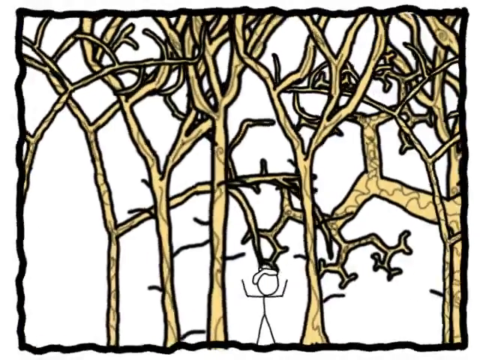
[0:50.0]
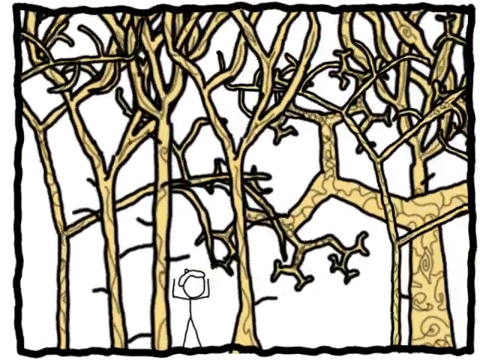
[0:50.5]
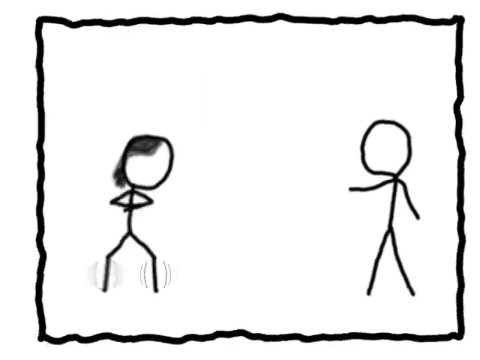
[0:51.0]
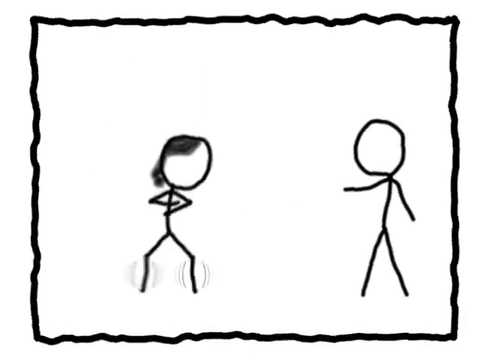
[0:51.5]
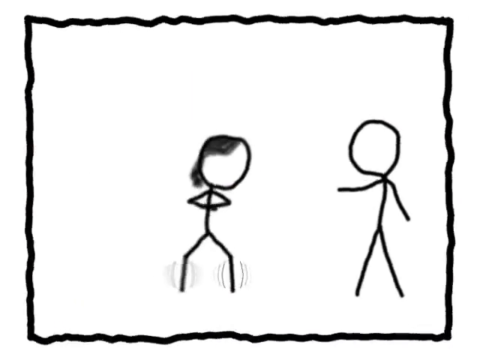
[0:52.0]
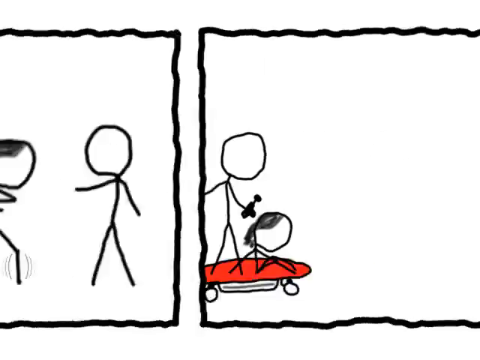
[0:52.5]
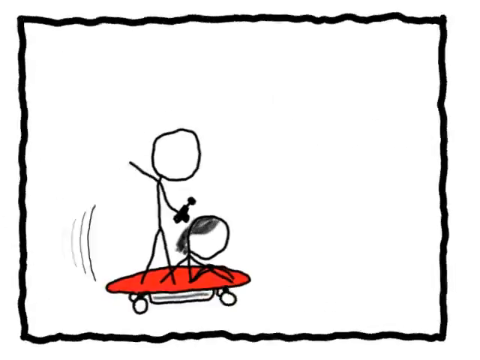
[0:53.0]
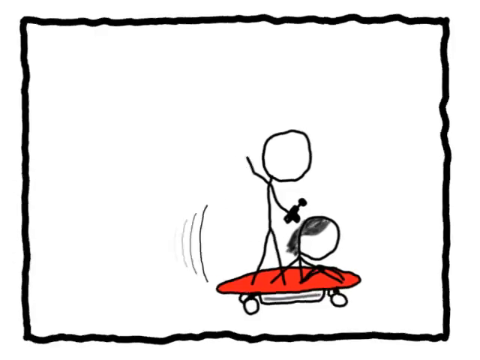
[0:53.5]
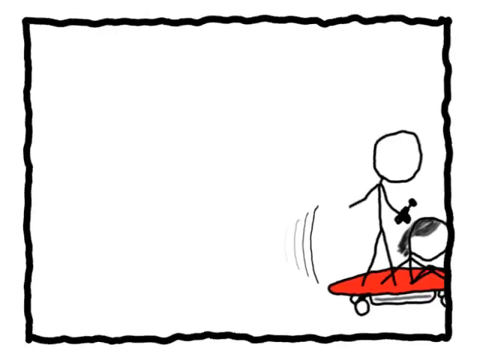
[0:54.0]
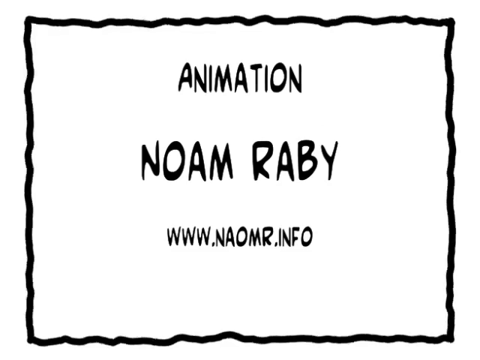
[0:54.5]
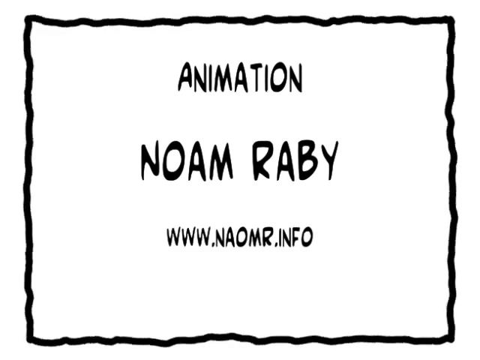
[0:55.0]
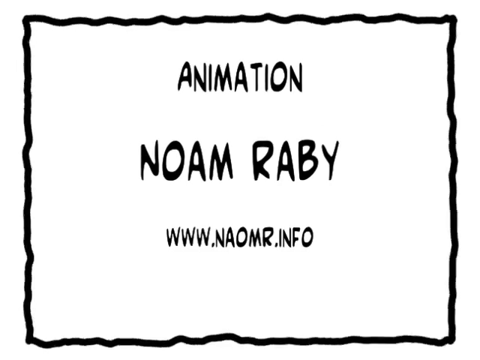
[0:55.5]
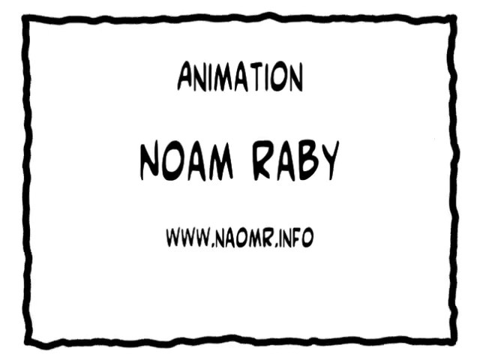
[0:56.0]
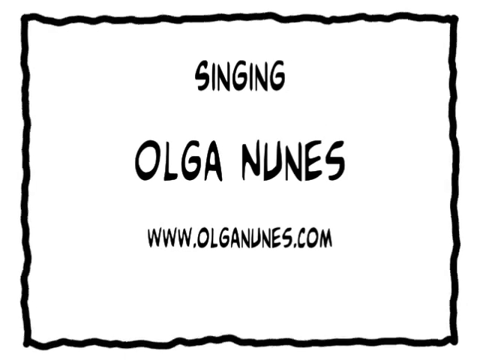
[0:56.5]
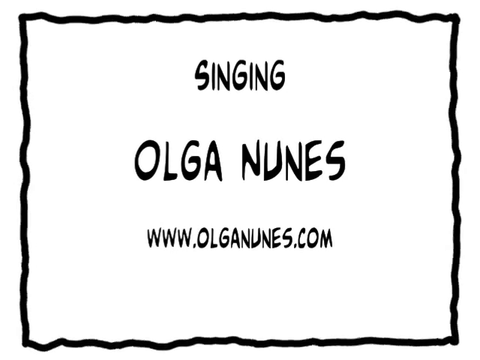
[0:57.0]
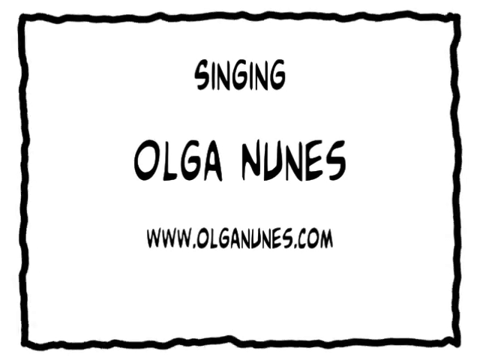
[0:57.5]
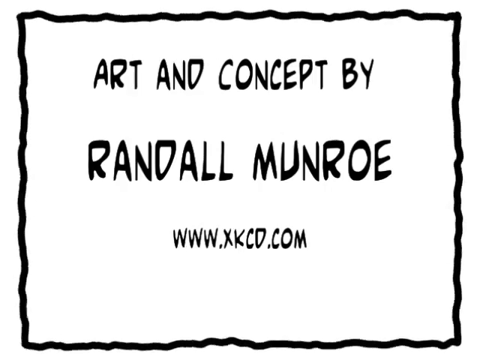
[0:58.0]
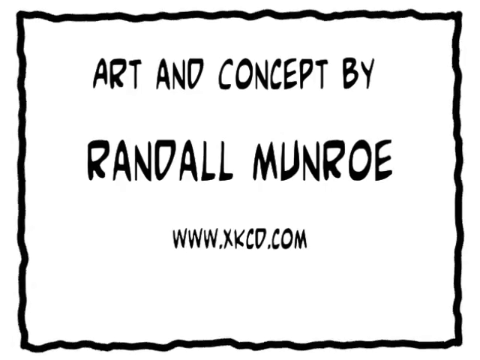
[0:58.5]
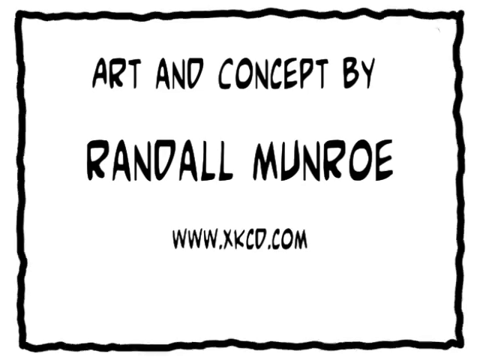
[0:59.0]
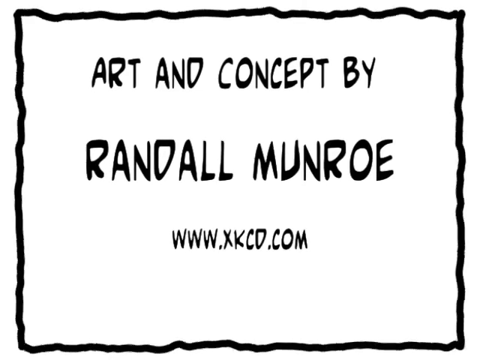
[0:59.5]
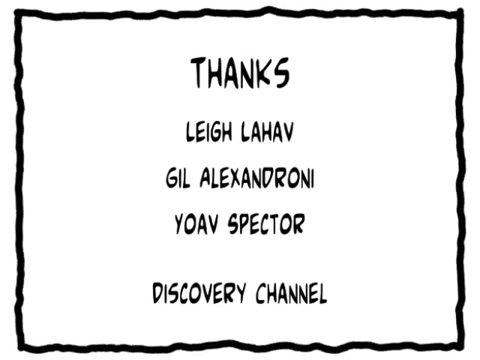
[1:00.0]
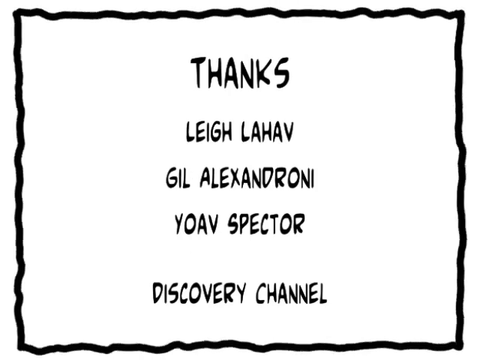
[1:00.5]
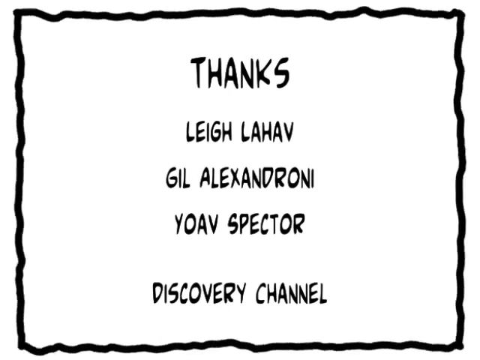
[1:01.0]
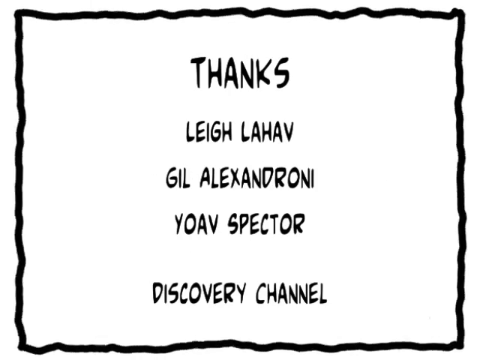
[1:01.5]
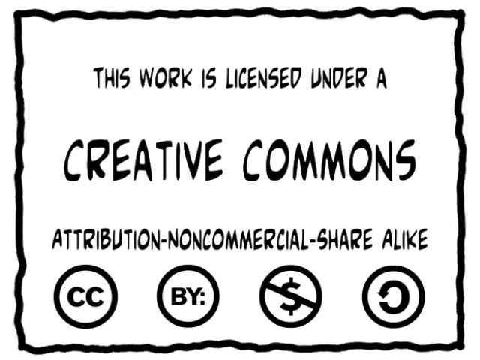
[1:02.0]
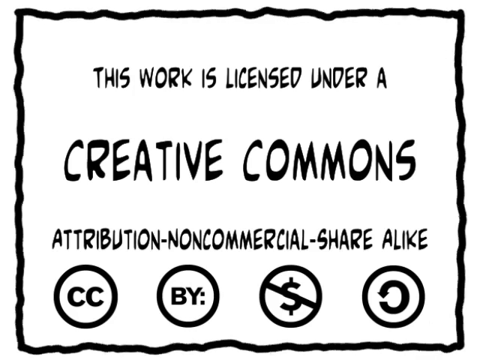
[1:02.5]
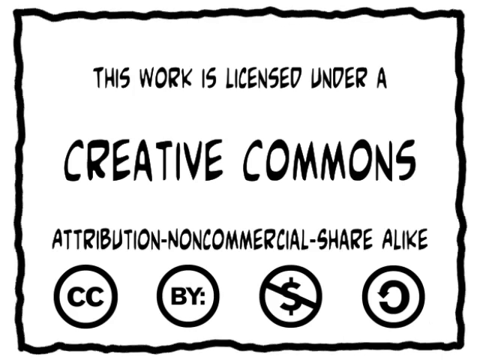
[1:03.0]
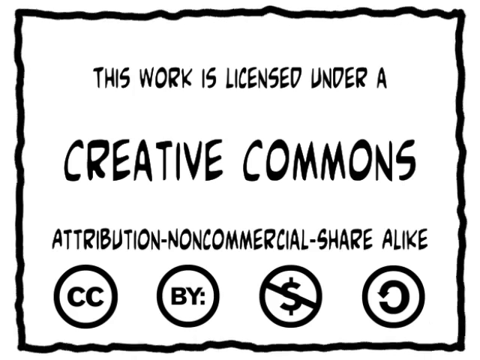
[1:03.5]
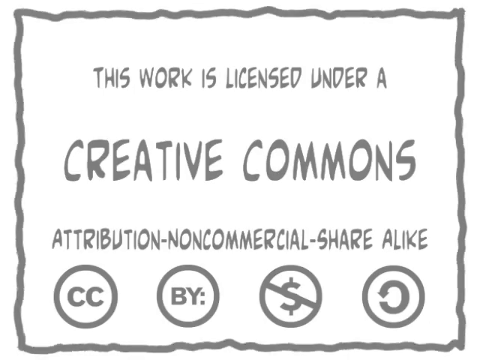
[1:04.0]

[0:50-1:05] In a new scene, the black border is hazy and wiggling as before, with a white background and what looks like trees with no leaves, just twigs and branches. One of the stick men is in the bottom middle section of the screen. The scene then changes to a completely white background with the two stick men on their own: the one with black hair on the left and the bald one on the right. The black-haired stick man moves toward the right-hand side of the screen, while the bald stick man has his right arm pointing toward him. They then sit on a red skateboard with four wheels on the left-hand side of the screen; two dash lines behind the skateboard suggest movement. They wheel off the screen toward the right-hand side.